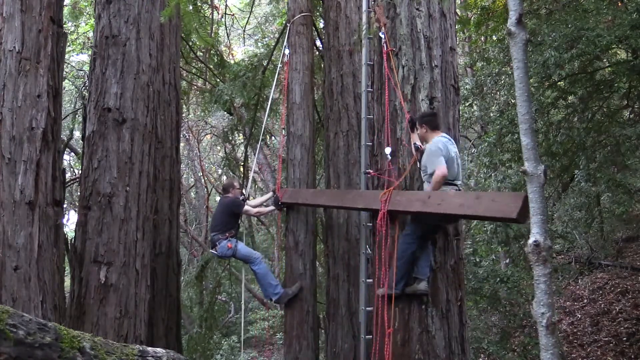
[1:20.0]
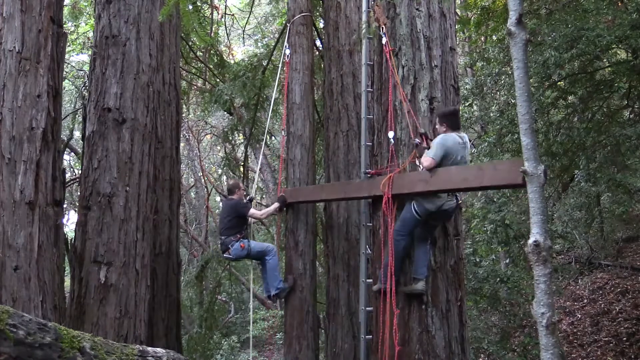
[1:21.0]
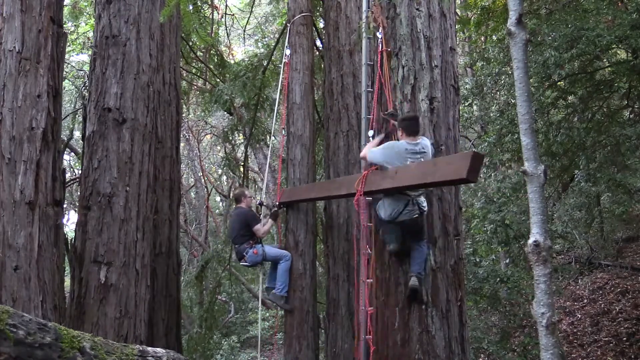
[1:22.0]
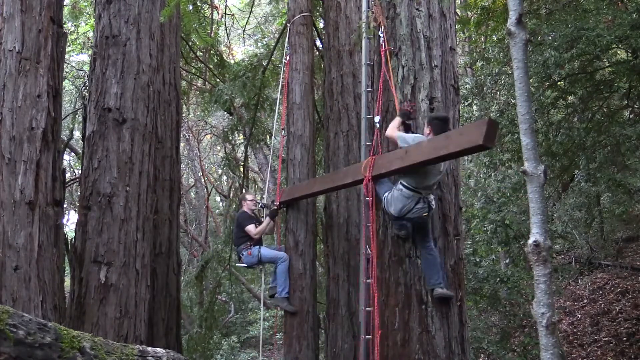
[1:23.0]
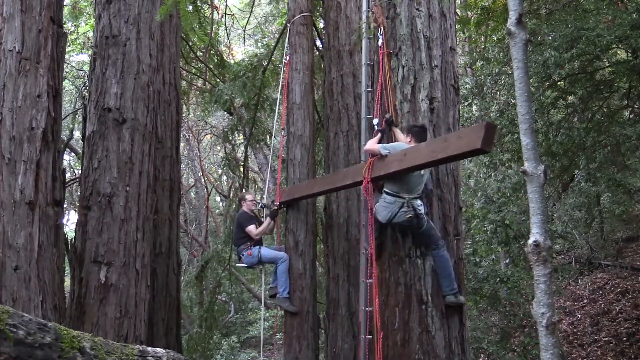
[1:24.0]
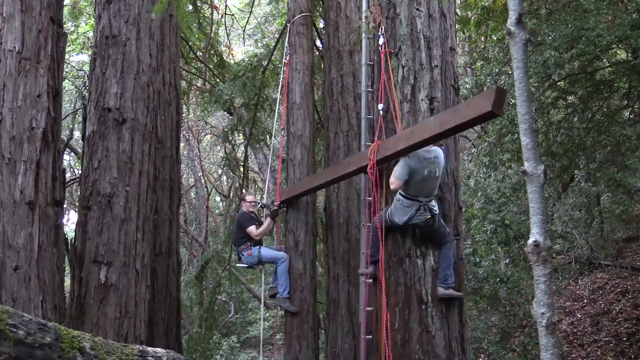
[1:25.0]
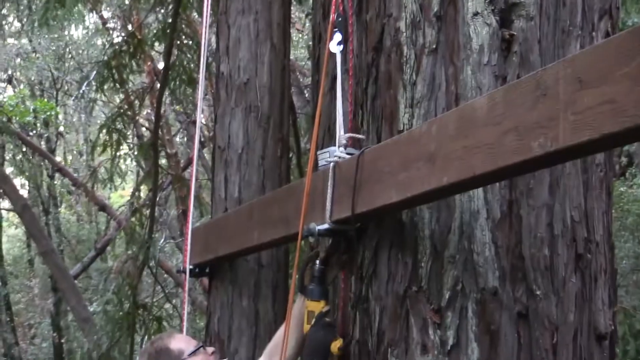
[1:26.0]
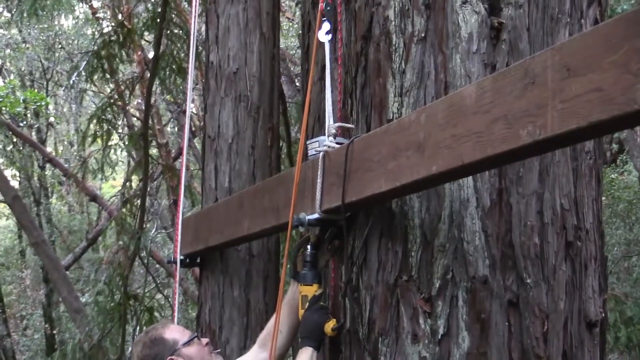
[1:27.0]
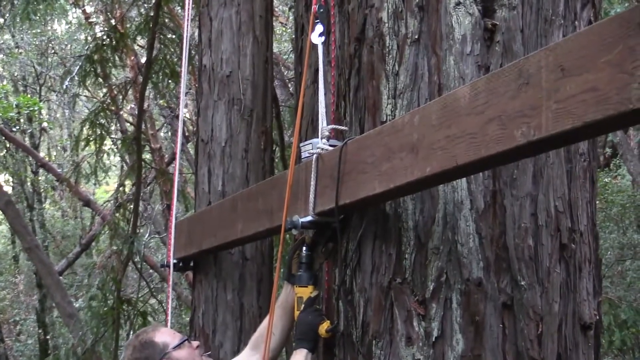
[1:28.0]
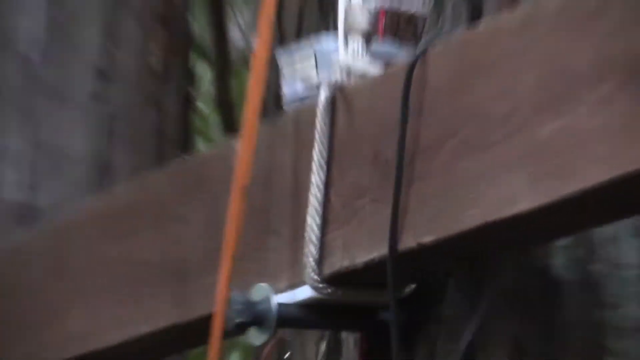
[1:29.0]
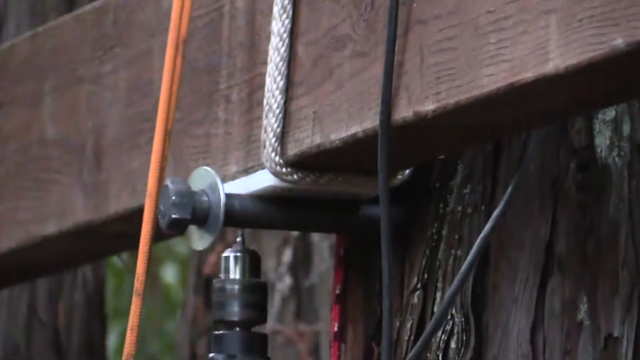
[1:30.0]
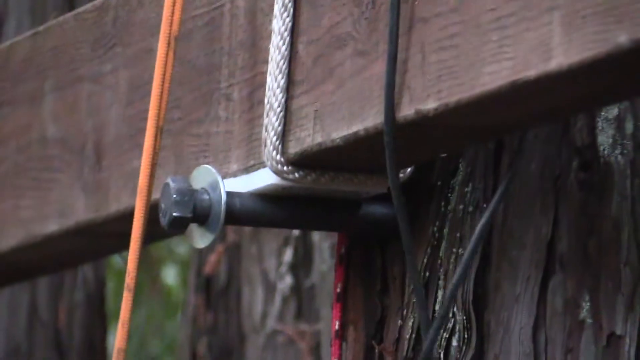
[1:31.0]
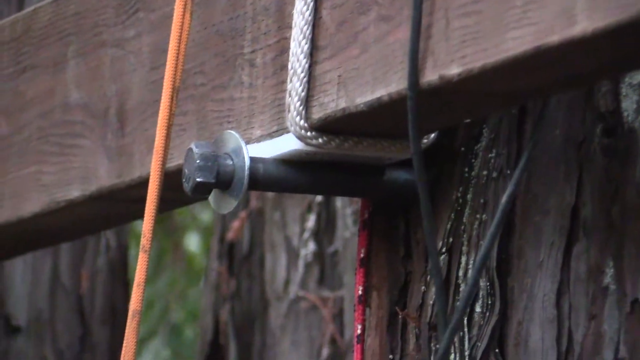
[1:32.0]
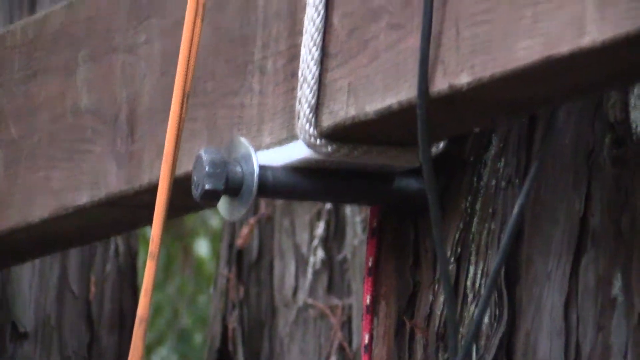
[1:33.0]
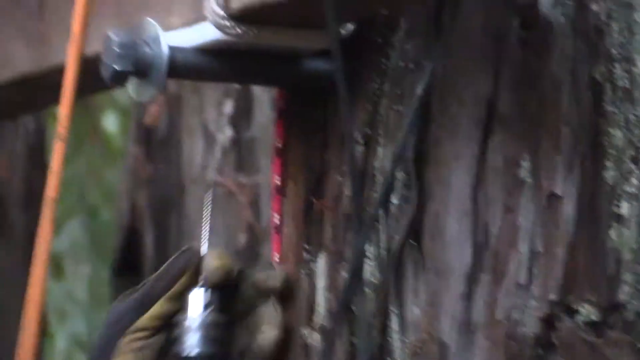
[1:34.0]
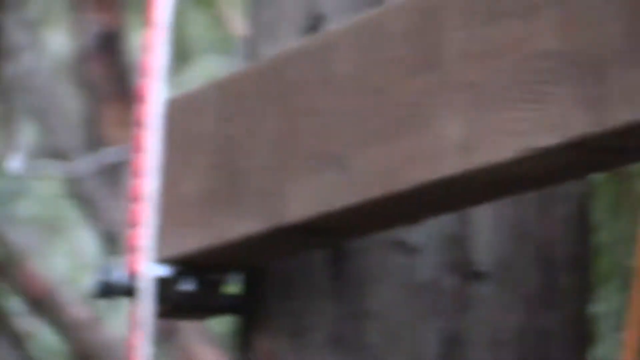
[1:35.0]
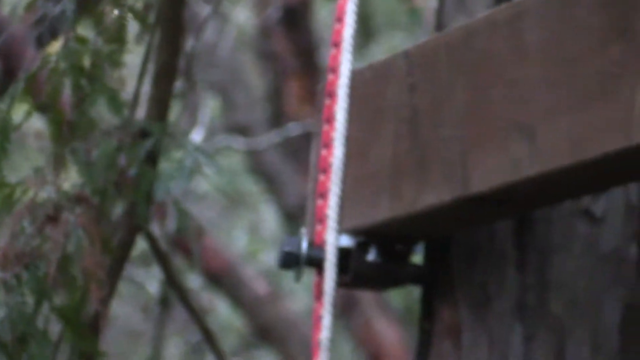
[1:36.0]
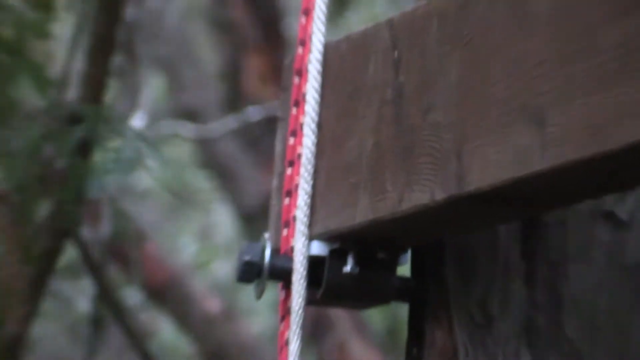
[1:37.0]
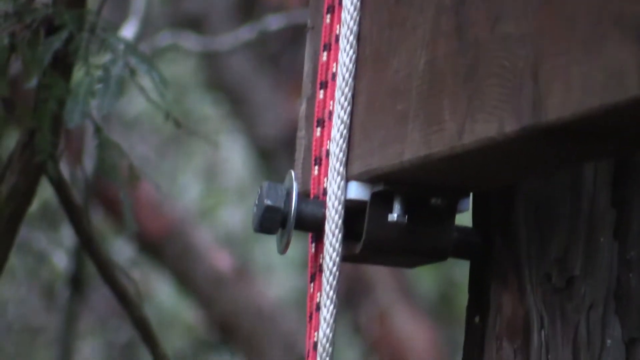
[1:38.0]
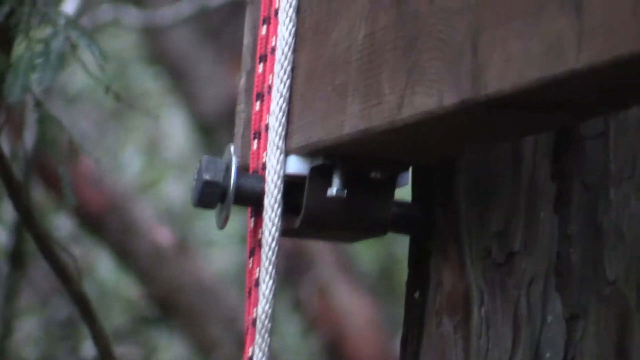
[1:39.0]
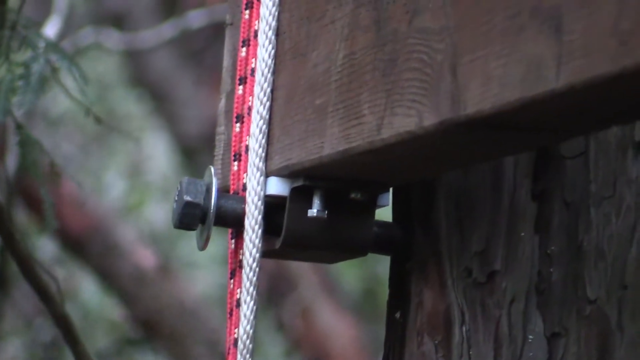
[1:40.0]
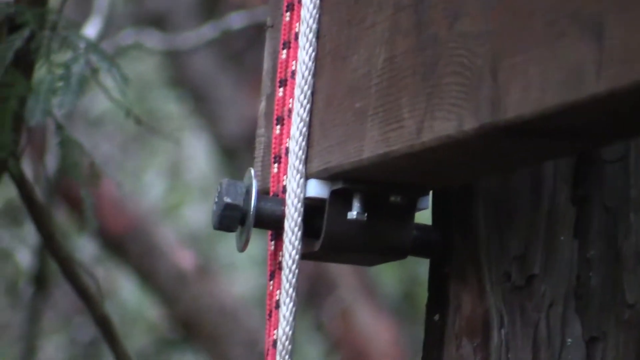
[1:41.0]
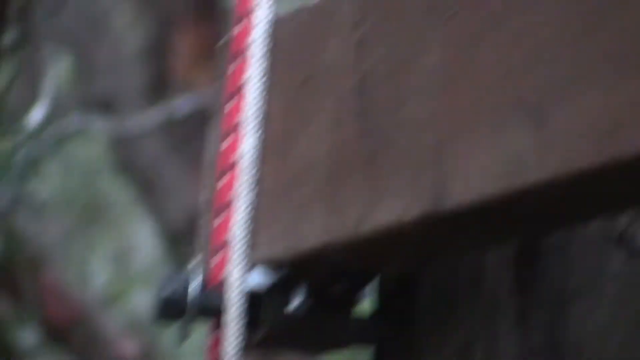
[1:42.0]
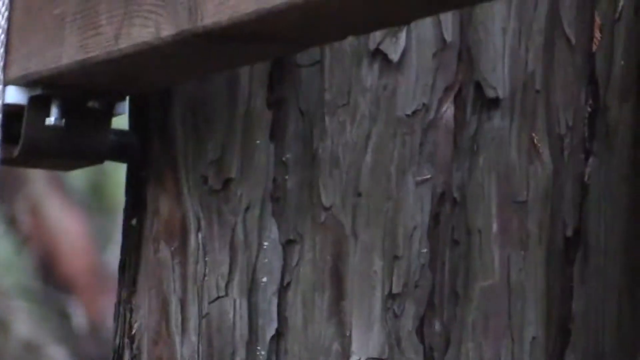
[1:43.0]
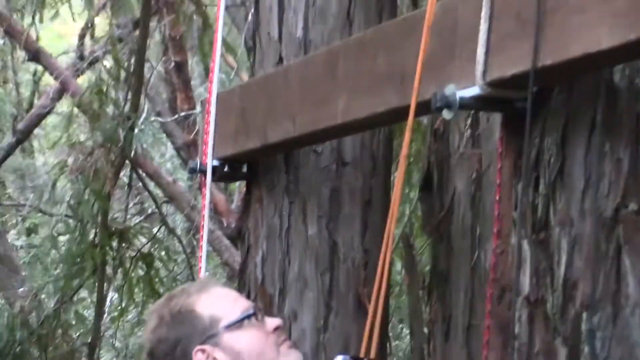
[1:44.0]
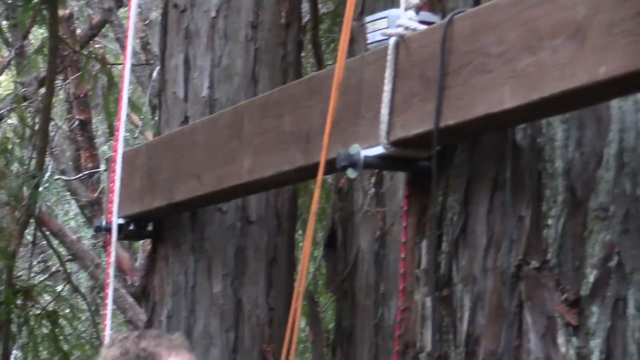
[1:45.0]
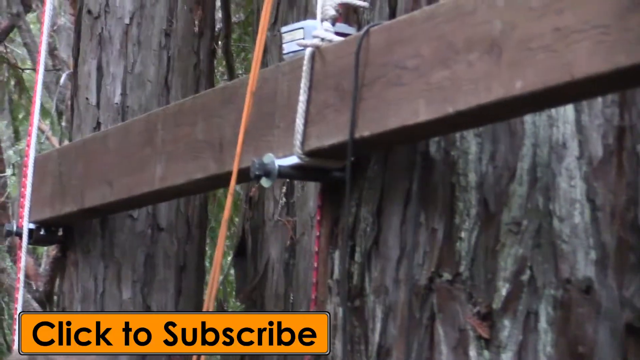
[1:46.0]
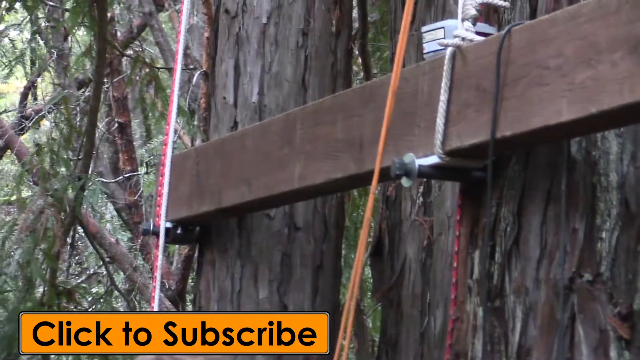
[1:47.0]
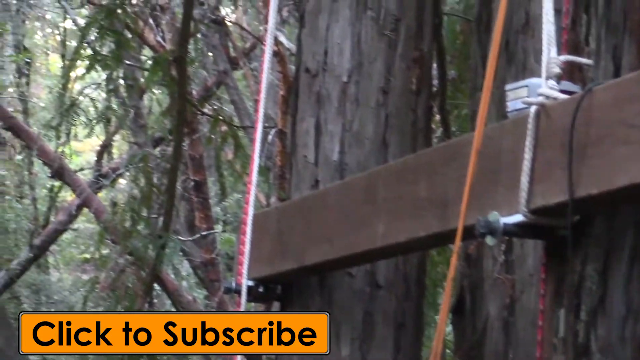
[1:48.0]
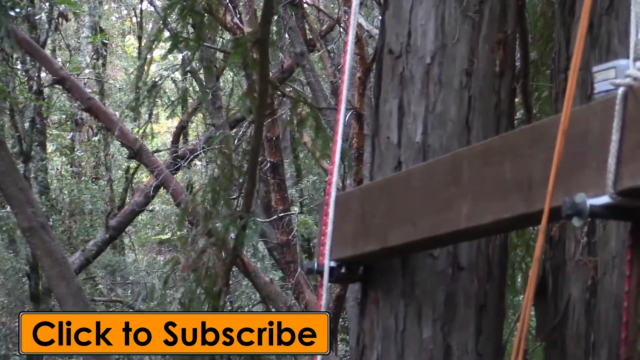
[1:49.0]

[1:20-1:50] The two men, still attached to the tree, pull a beam up. The man on the right holds a rope to stabilize the beam, which is now level with his head. The man on the left pulls on and adjusts the ropes to bring the beam up from just below his shoulder height to level and parallel with his head. He briefly uses his right hand to stabilize the beam before pulling on the rope to make it completely parallel between the two men. The scene then changes to show one of the men, at the bottom of the screen, using a power drill to attach the beam to the tree. The beam now has a silver bracket on it, and he drills a screw in. As he pushes up on the power drill, the camera zooms in for a close-up of the bracket and the beam being attached to the tree.